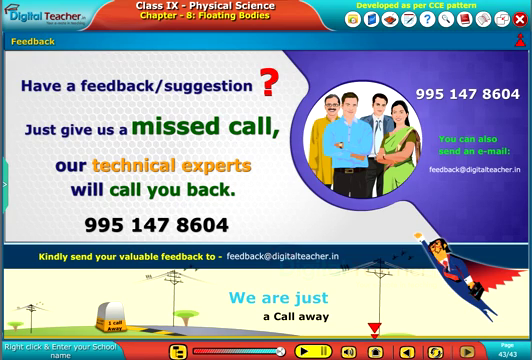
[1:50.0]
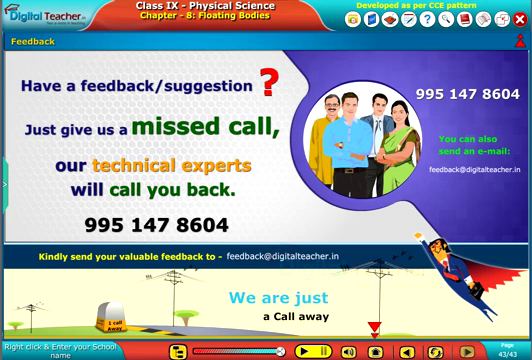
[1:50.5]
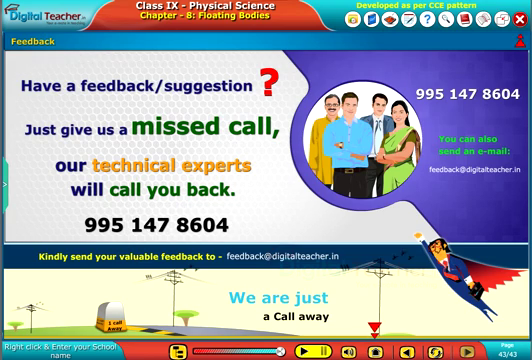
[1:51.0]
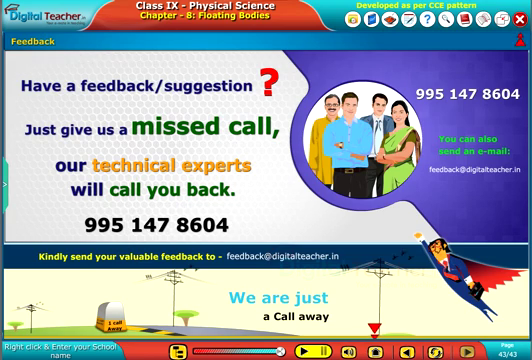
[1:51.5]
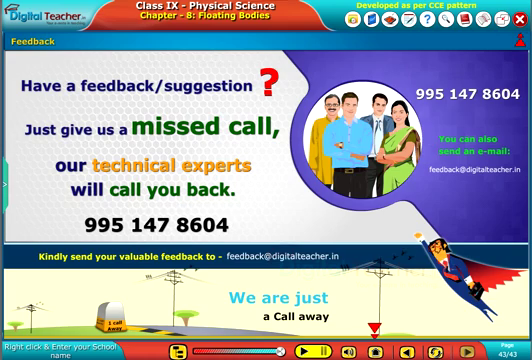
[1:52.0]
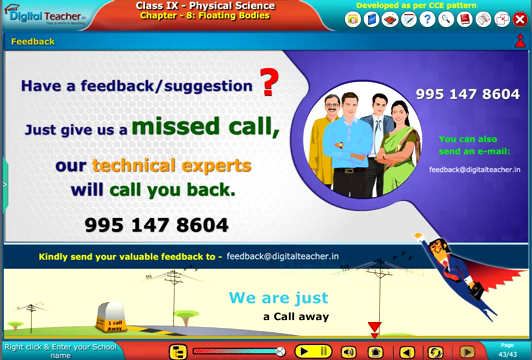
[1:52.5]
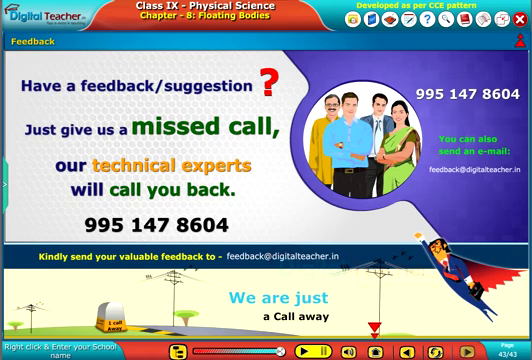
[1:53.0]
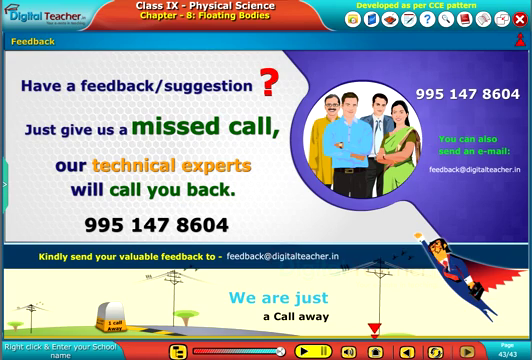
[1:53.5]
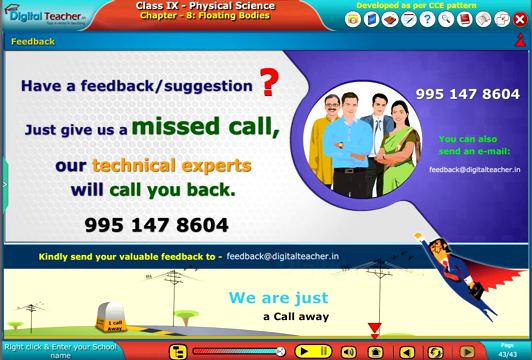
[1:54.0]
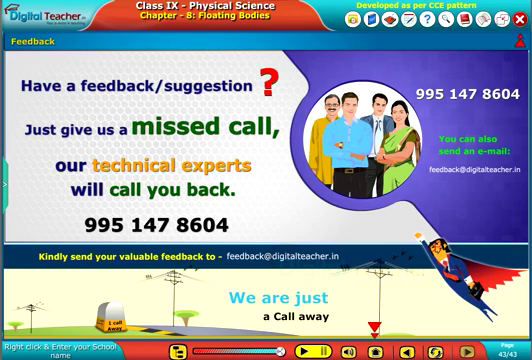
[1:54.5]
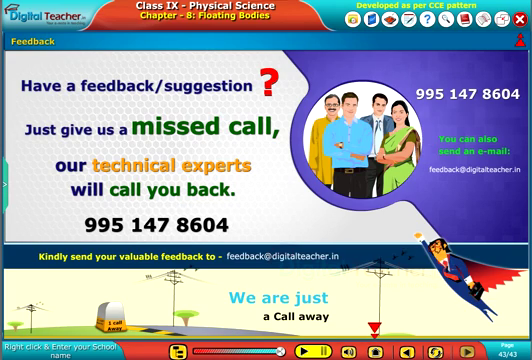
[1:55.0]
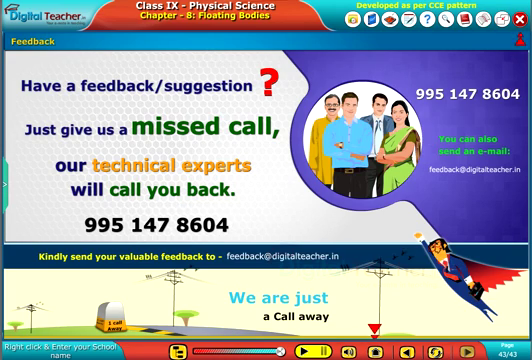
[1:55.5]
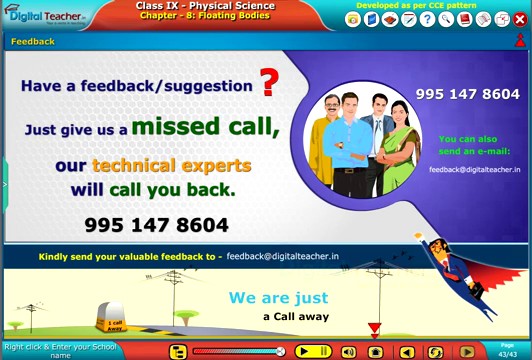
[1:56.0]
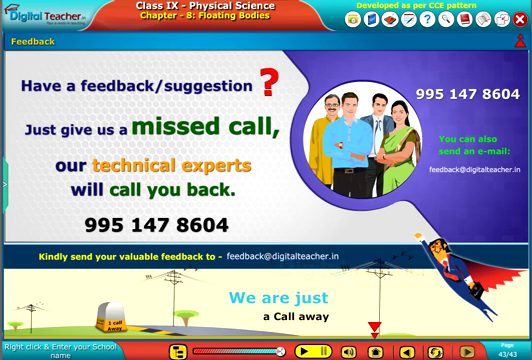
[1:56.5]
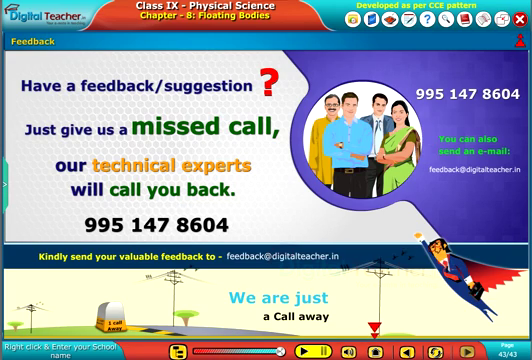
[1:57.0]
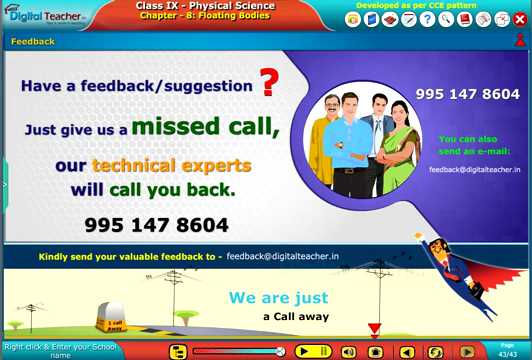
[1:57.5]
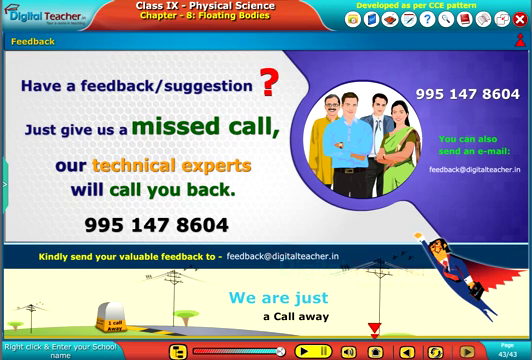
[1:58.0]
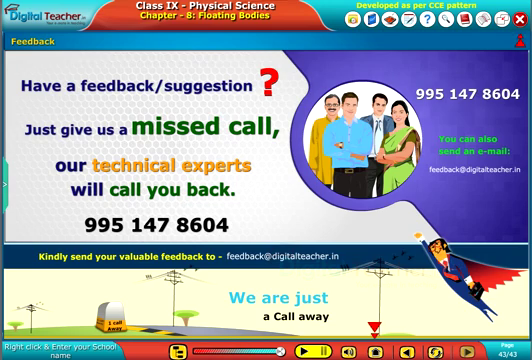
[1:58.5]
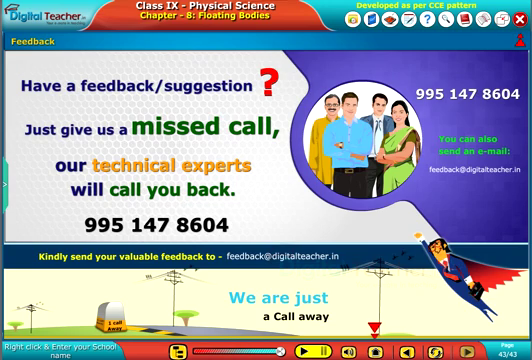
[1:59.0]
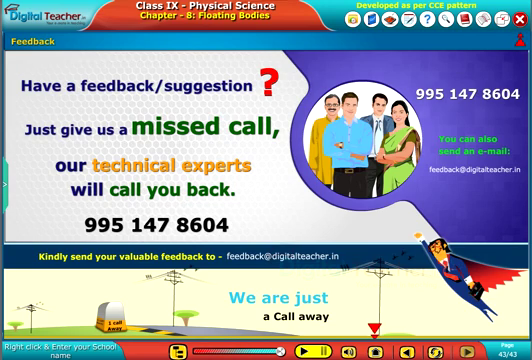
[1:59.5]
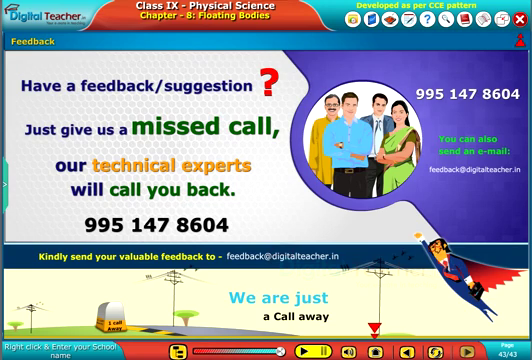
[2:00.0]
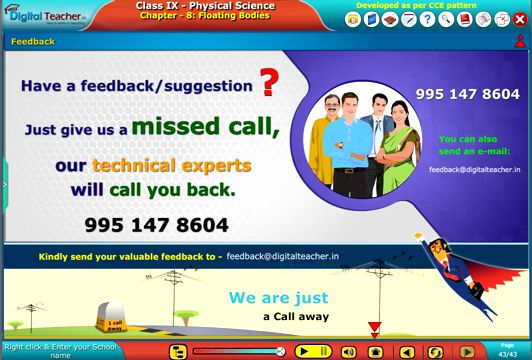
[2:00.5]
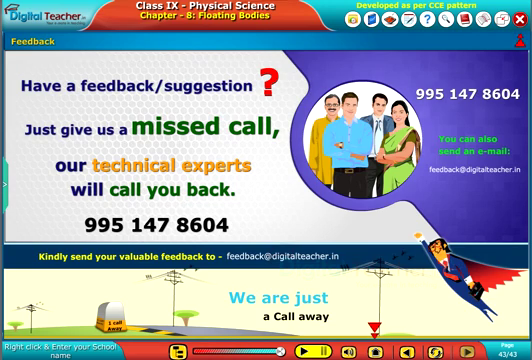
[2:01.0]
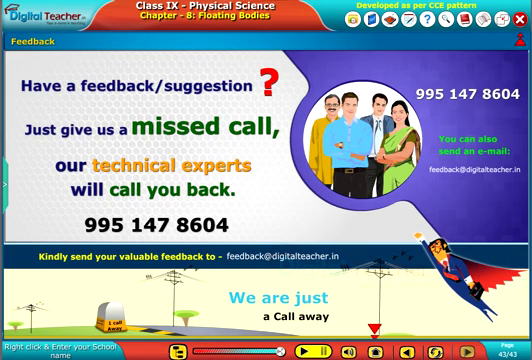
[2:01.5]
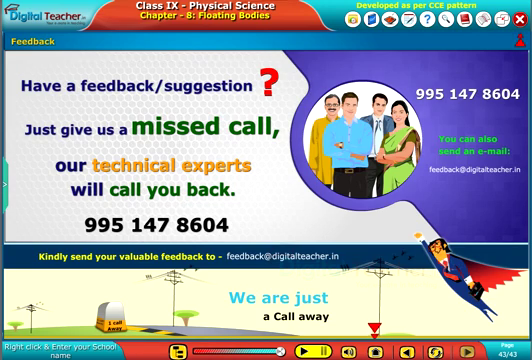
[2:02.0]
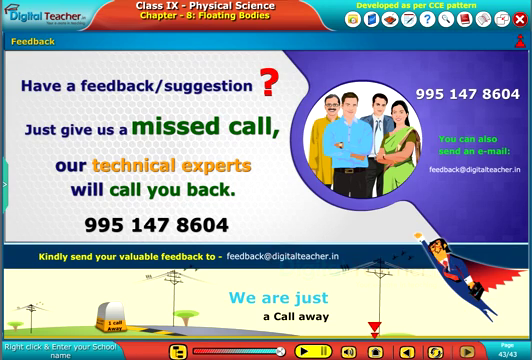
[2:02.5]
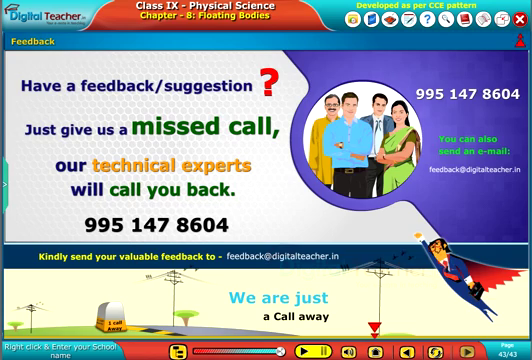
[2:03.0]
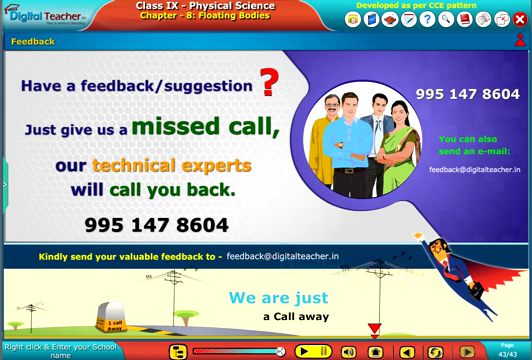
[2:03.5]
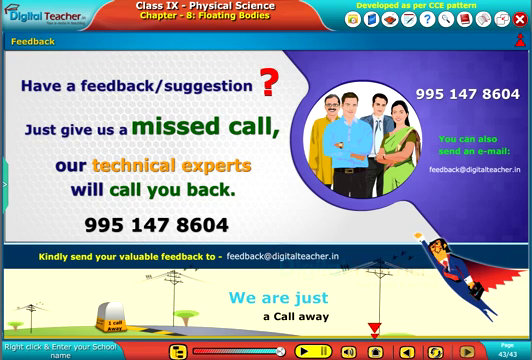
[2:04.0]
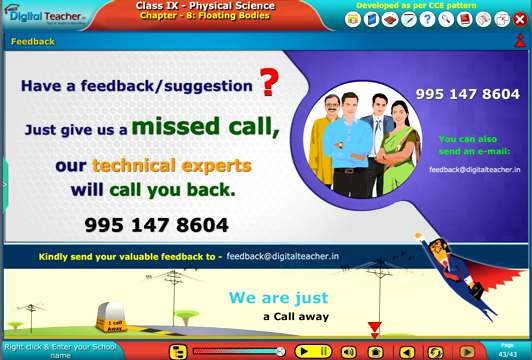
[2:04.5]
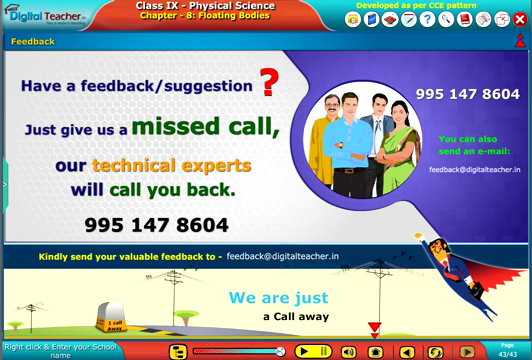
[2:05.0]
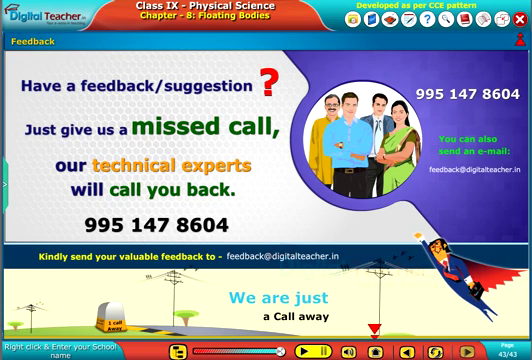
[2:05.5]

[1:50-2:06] The same screen is shown. At the top it is identified as the Digital Teacher platform, class 9, physical science, chapter 8, floating bodies. At the bottom right are other options, represented in circles that each contain an item. The text reads "have a feedback suggestion. Give us a missed call. Our technical experts will call you back", gives the number 995-147-8604, and asks to send feedback to feedback@digitalteachers.in, followed by "we are just a call away". A picture of Superman is on the right, and four people appear in a circle. The number is repeated on the right, with the line "you can also send us an email to feedback@digitalteachers.in". A red arrow at the bottom points to suggestions, and there are extra items to choose from. On the left, folders can be expanded.